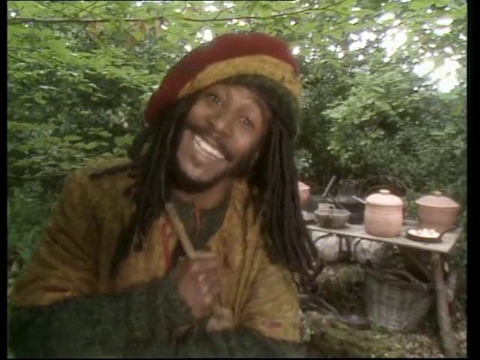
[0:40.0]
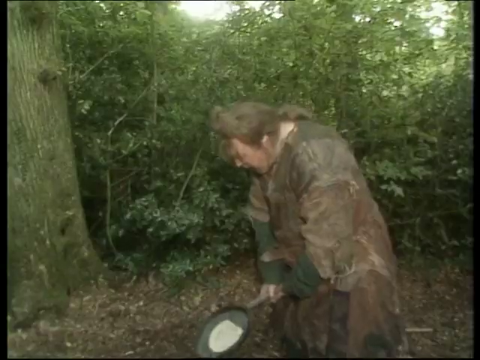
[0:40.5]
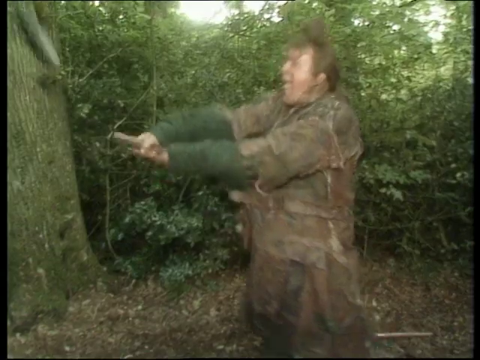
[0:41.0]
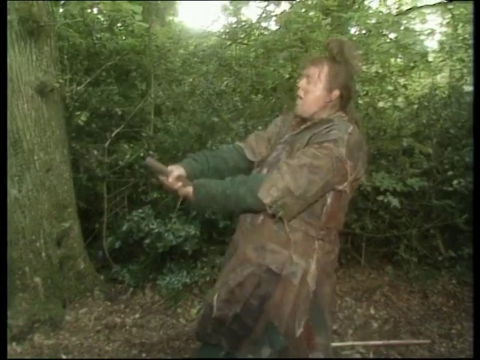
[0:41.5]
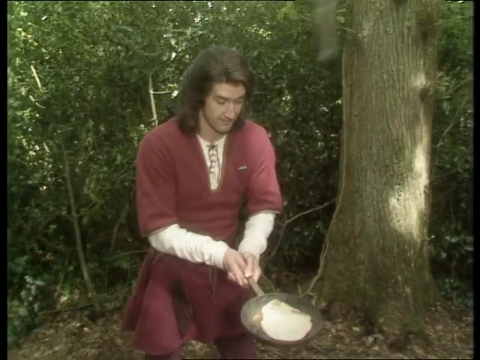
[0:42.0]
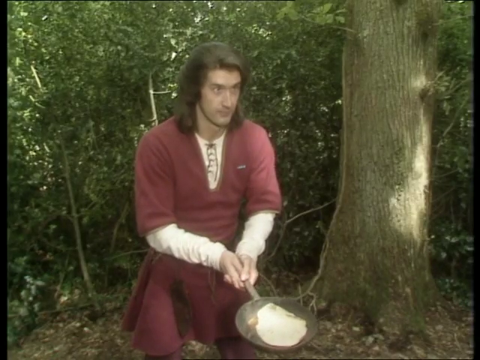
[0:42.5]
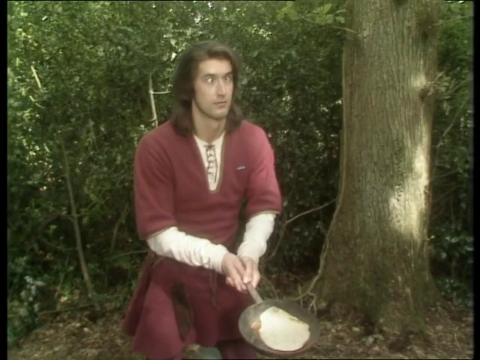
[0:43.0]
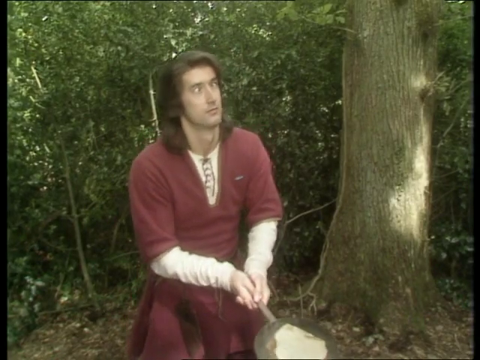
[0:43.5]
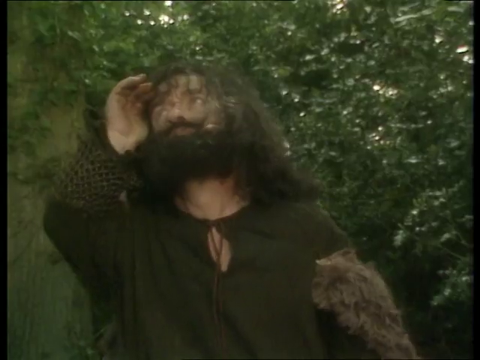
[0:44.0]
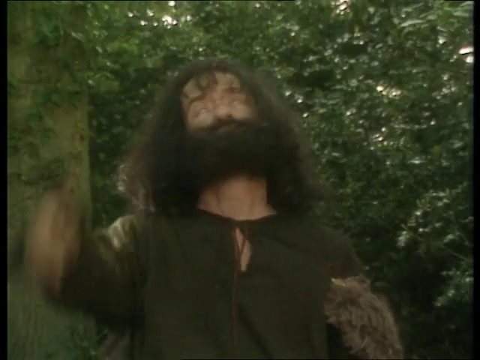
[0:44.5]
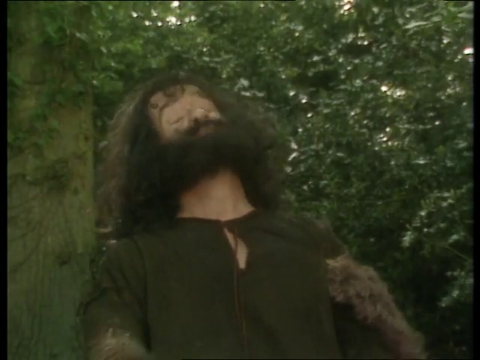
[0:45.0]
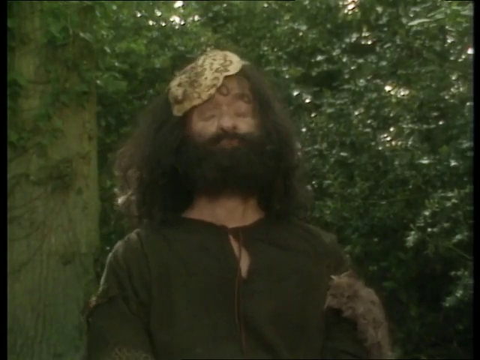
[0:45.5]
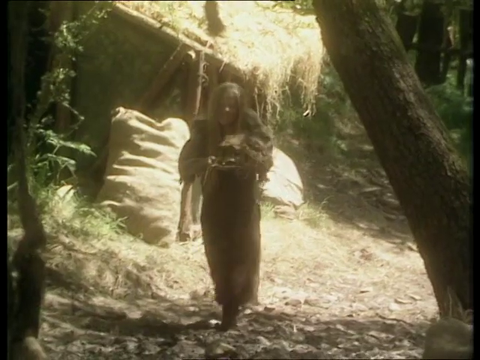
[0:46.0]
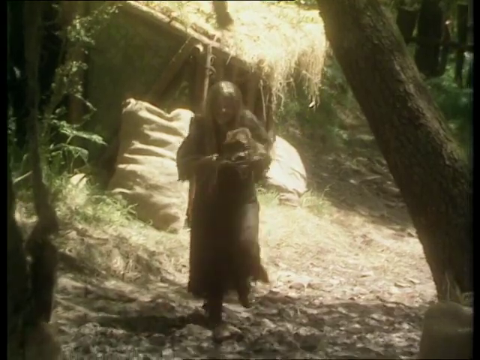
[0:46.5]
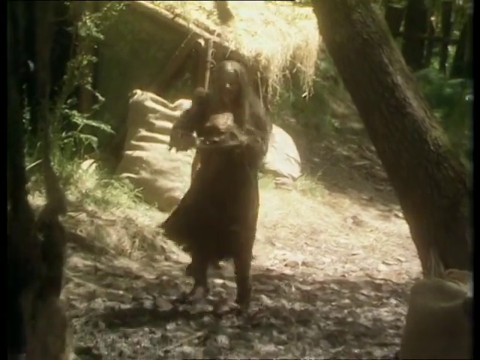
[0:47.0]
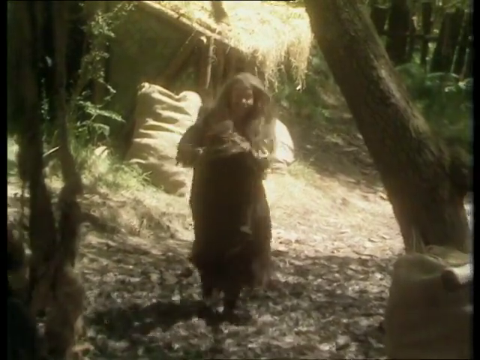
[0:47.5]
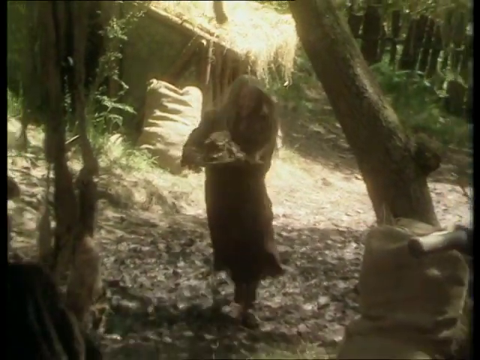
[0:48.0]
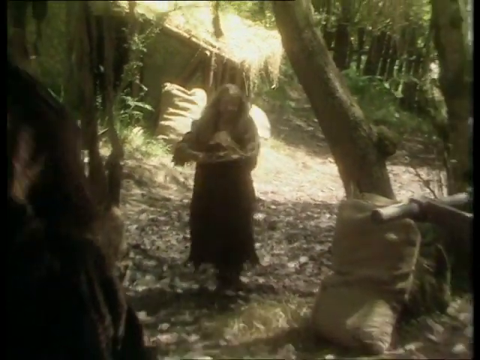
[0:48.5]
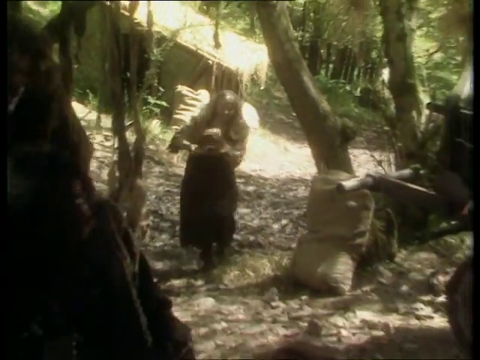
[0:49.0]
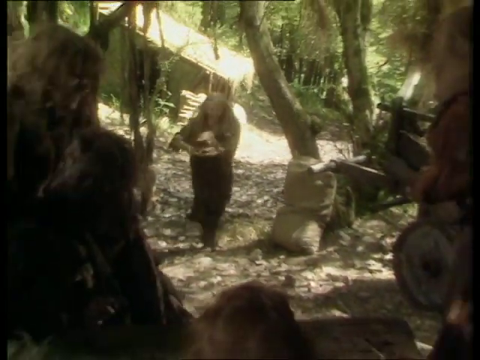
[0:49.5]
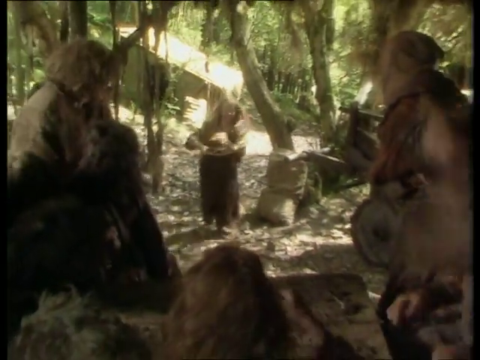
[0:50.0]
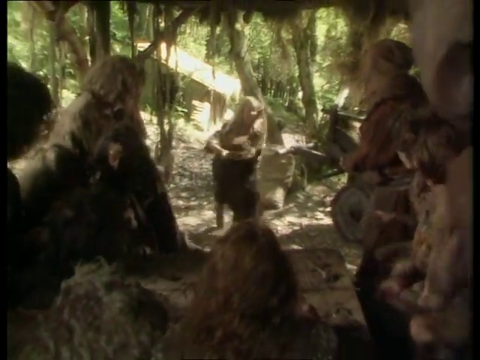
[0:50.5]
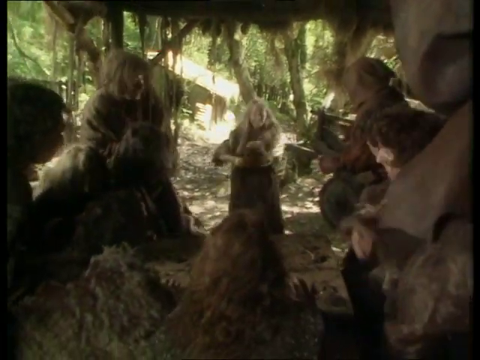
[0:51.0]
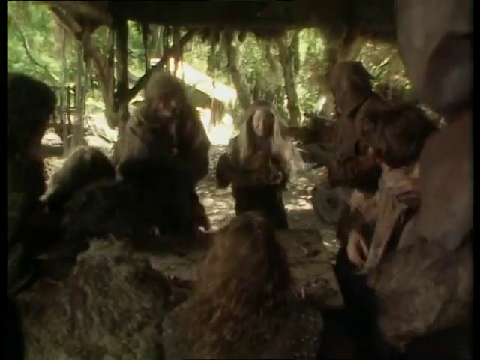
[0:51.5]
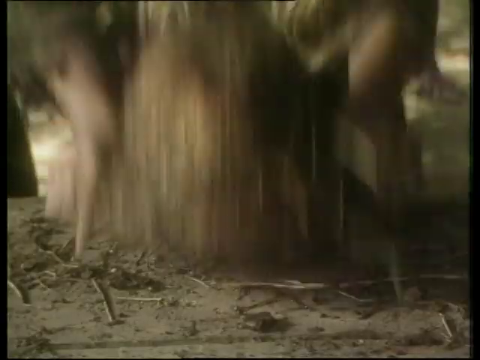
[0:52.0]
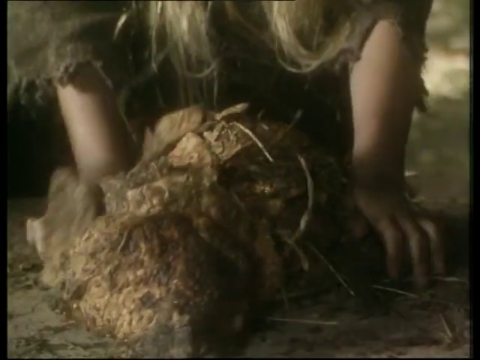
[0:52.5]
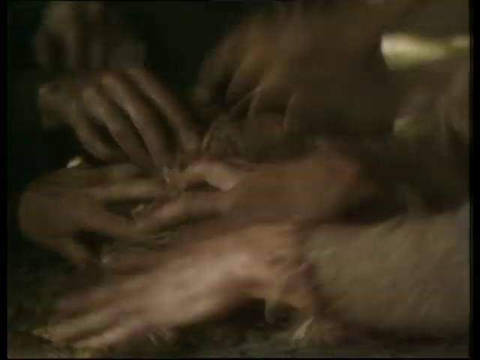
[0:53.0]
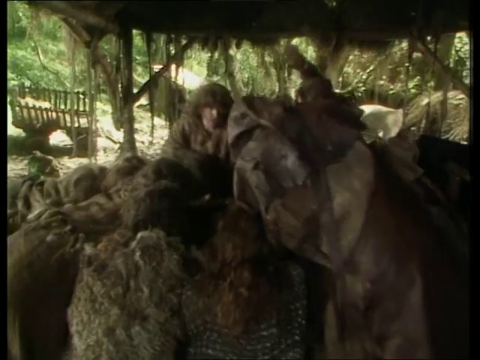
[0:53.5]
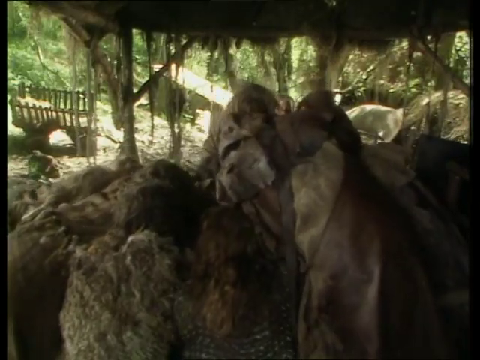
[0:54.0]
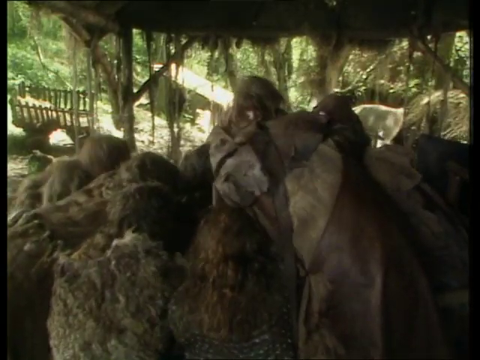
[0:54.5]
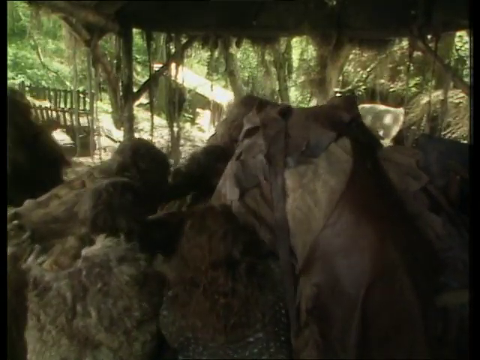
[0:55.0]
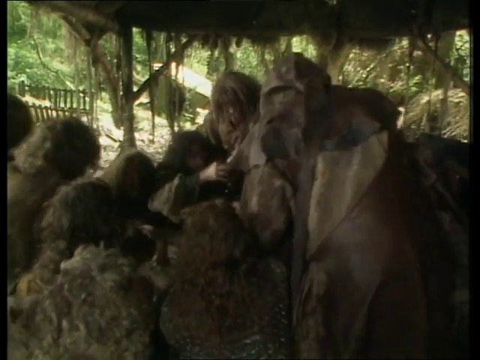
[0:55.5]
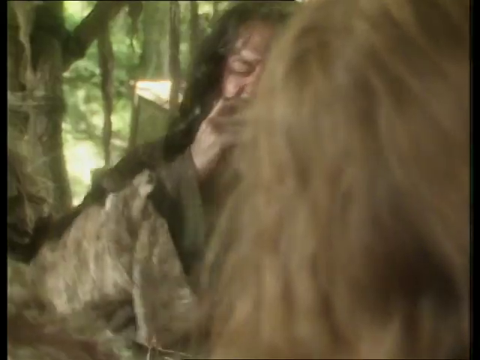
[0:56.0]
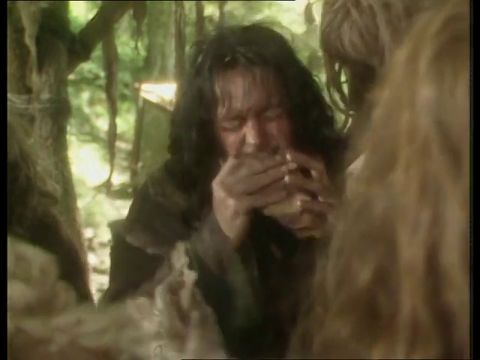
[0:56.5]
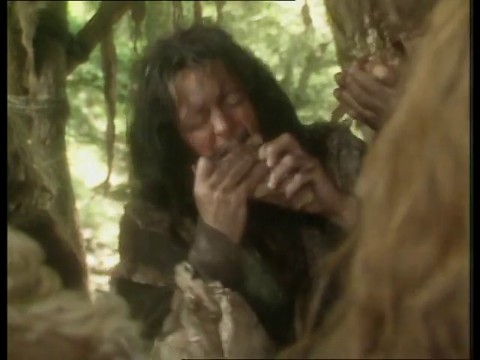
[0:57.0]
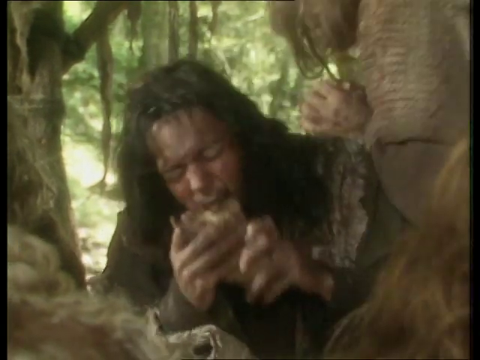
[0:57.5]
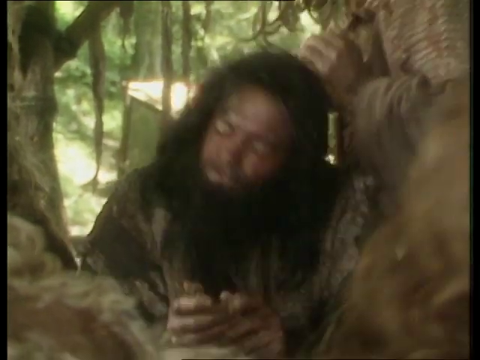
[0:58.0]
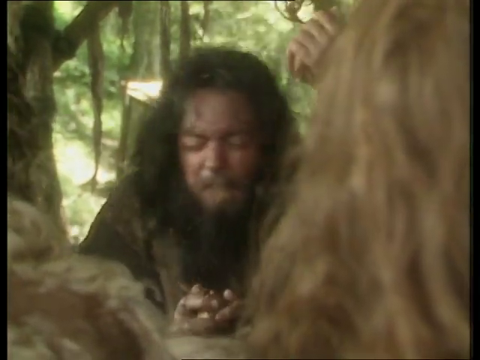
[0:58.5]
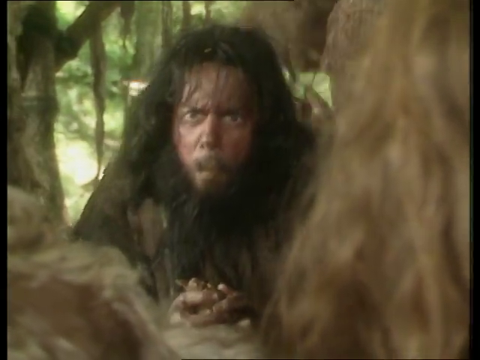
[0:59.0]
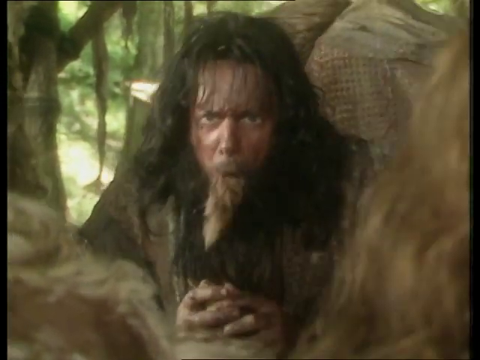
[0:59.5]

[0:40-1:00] The heavier-set woman stands facing sideways to the camera with both hands outstretched in front of her, holding a pan in both hands. She flips the pan up, but the pan part flies off, leaving her with only the handle. She looks up as it flies off and then looks down at the handle. In another scene, the man in the red tunic holds a pan in both hands with some sort of food in it that is hard to make out, possibly a pancake or an egg. He is looking down at the pan when the pan the heavier-set woman threw up comes down and hits him on the head. He looks up, his eyes cross, and he starts to slowly fall, but the camera cuts before he falls completely. The little person looks up at the sky, and what looks to be some kind of browned pancake falls on top of his head. On a dirt road, a woman with long hair holds something like a plate wrapped in what almost look like tattered leaves. She wears a very brown, tattered dress. She runs from some sort of cottage with a hay roof behind her, up to what looks to be a group of people in tattered clothes with long hair. She places the plate on a dirty table; the food is hard to identify but very dirty looking, and they all clamor around it and eat it.